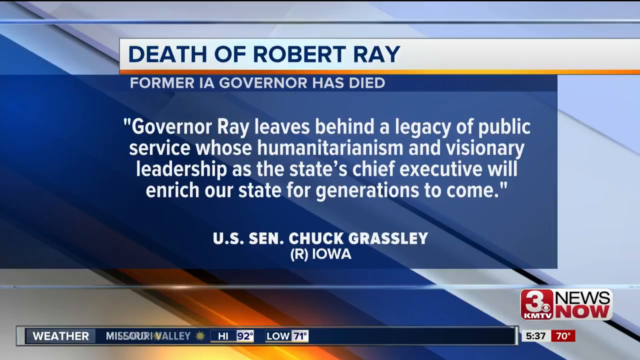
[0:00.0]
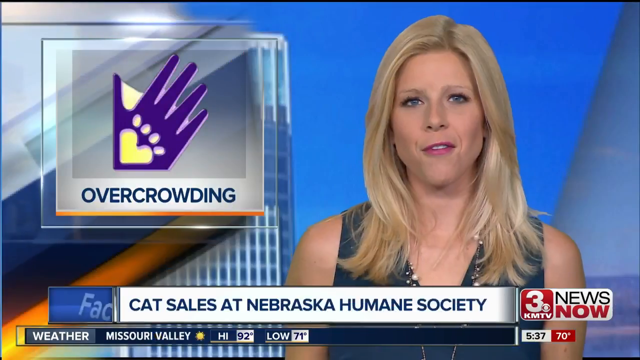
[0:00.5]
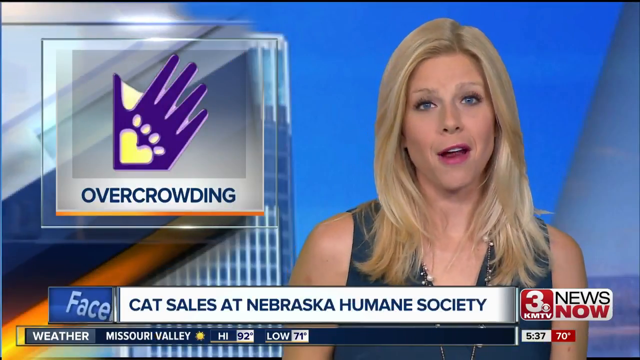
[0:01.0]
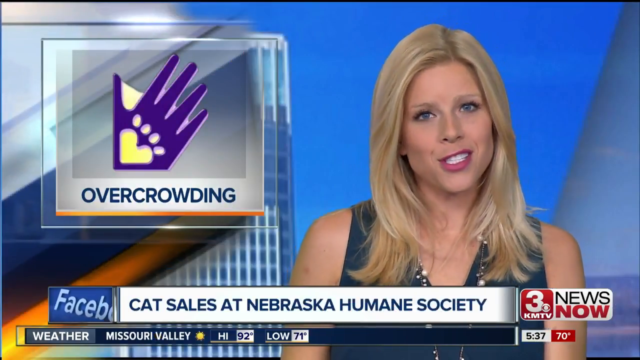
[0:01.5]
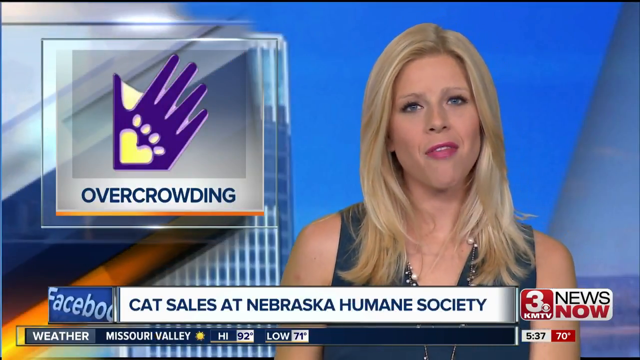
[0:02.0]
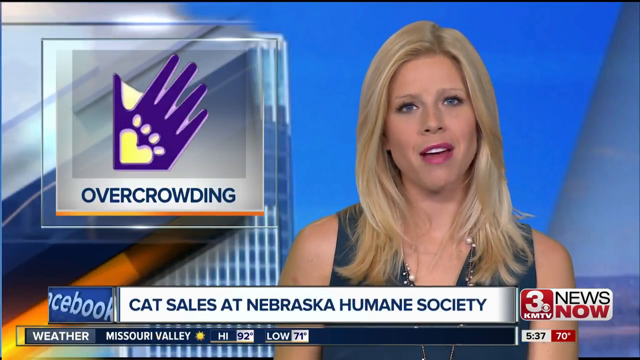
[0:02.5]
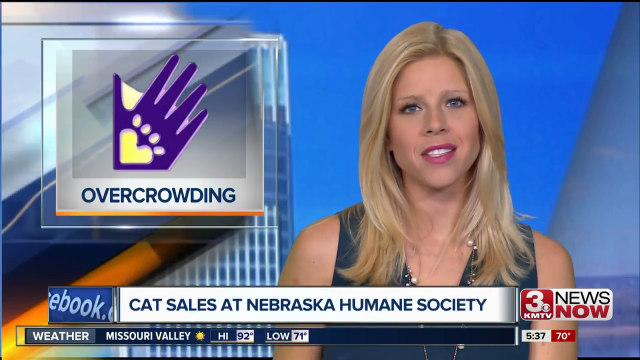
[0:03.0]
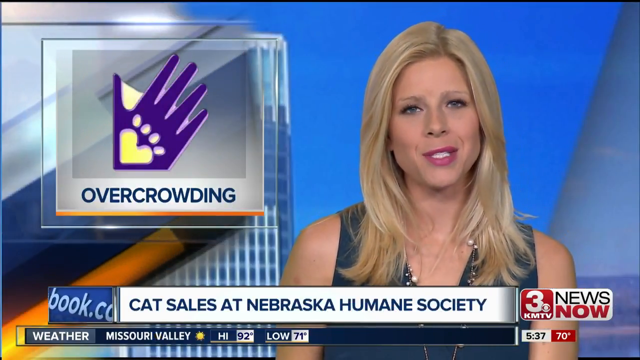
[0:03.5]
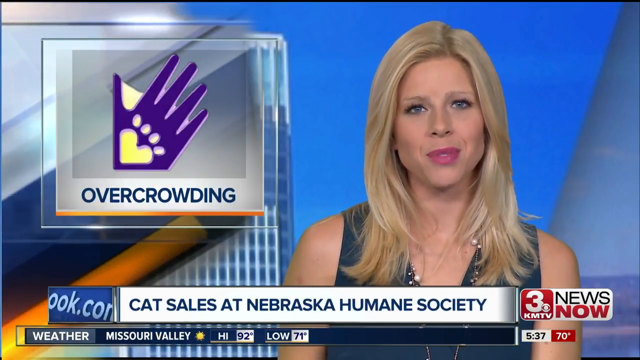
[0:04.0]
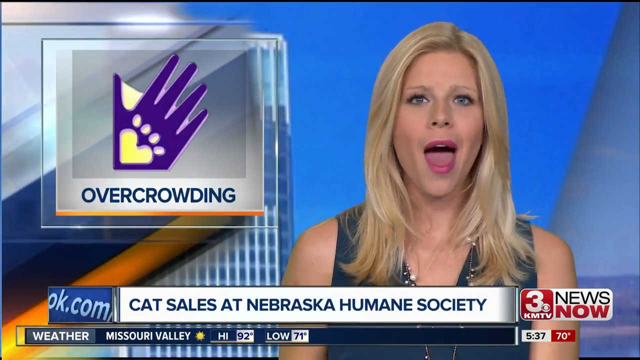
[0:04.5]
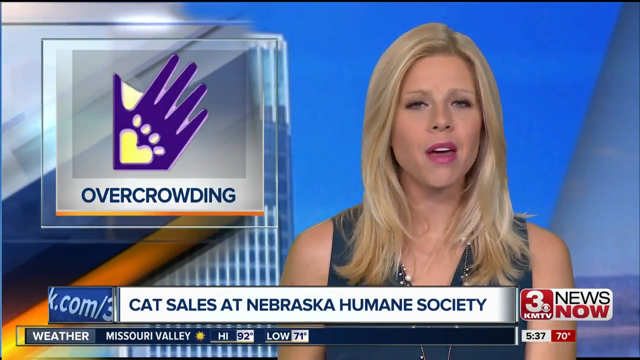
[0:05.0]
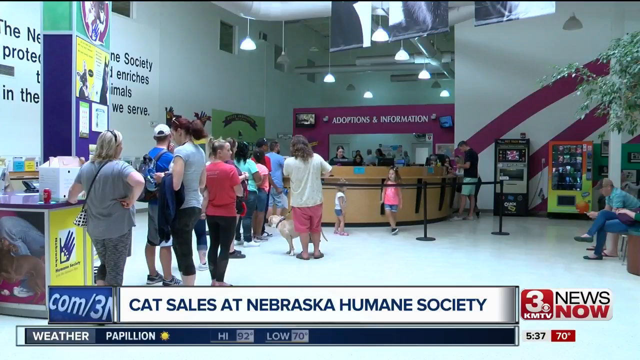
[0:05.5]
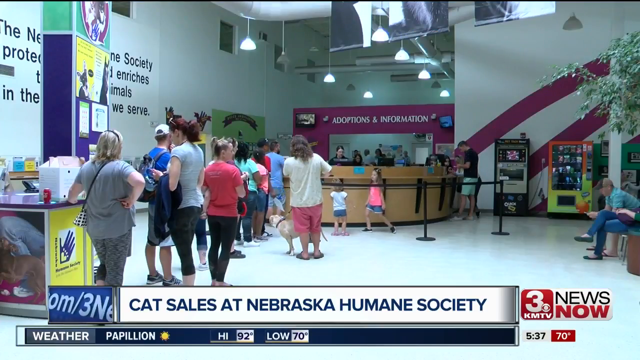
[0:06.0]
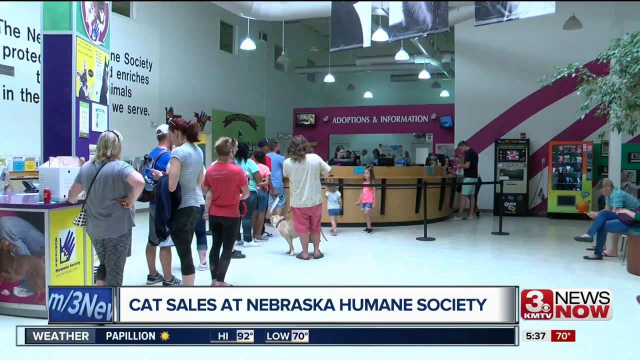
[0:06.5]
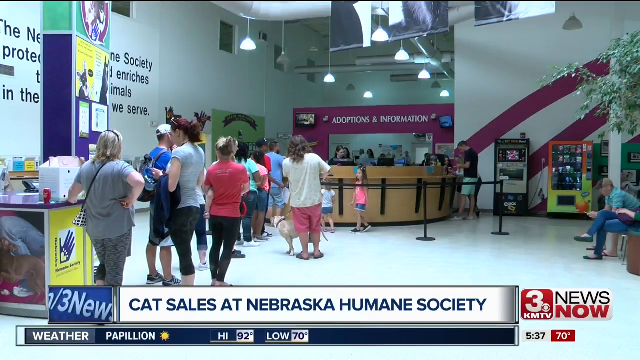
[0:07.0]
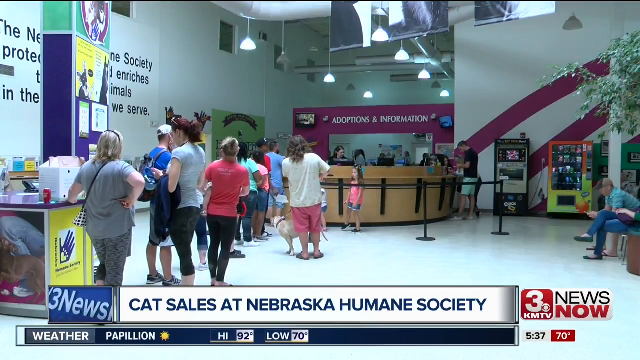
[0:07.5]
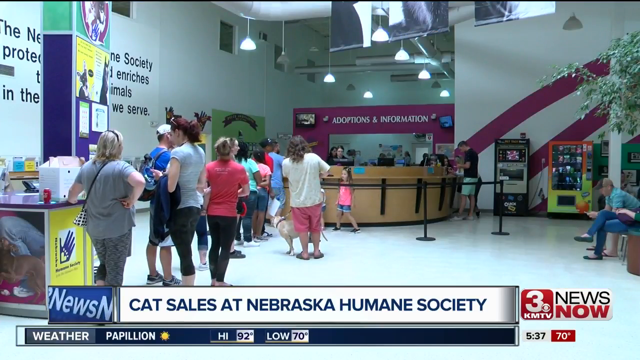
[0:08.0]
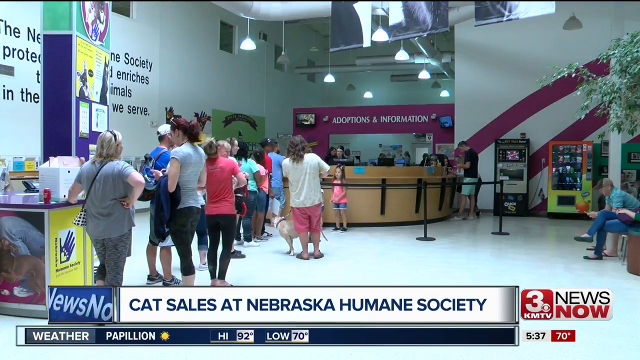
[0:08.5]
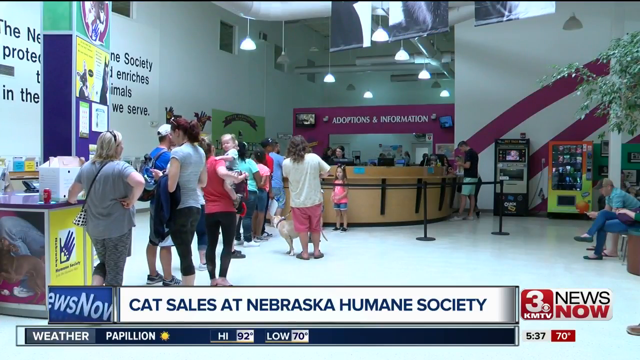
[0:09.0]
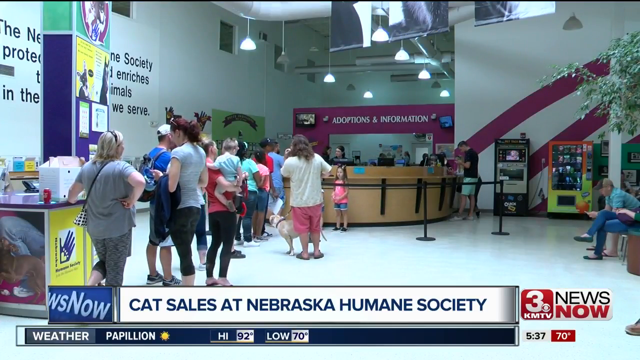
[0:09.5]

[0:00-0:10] A blonde newscaster appears on the right side of the screen, wearing what looks like a sleeveless blue top. She has long blonde hair down to her shoulders and red lipstick, looks to be in her 30s or 40s, and talks to the camera. In the top left is what looks like a square containing a drawing of a purple hand, with a yellow paw inside the hand. Below it, blue text reads "overcrowding". A white banner at the bottom reads "cat sales at Nebraska Humane Society", and below it another banner shows the weather in white text: "Missouri Valley, high 92, low 71". At the bottom right is "3KMTV News Now" with a time of "537" and "70 degrees". The video then transitions to what looks like the inside of an adoption center. A receptionist table is in the middle, and above it is a purple area that looks like an entryway, with "adoptions and information" in white above it. Eleven people are visible waiting in line from the middle to the bottom left, all facing away from the camera; they seem to be various people, including young women and men. Two very small children are visible in front of the counter: a girl in a pink shirt and a little child in a white shirt. At the very right of the counter there appear to be two people on the other side, and the counter looks circular. On the right side, two more people sit waiting. One man has a white dog in front of him.